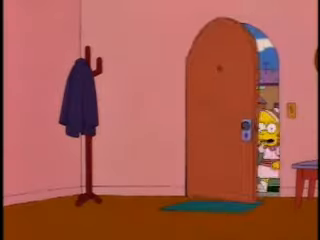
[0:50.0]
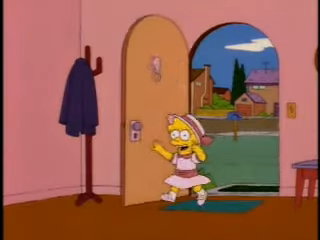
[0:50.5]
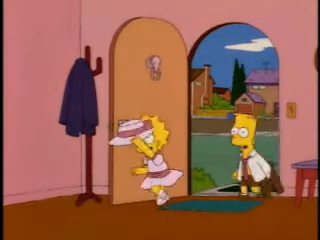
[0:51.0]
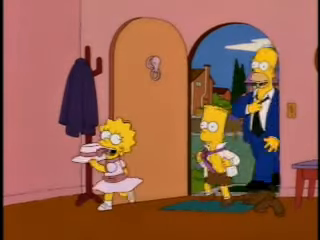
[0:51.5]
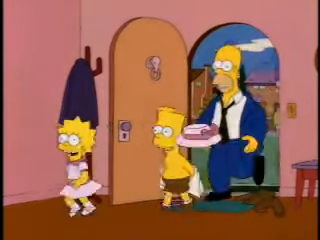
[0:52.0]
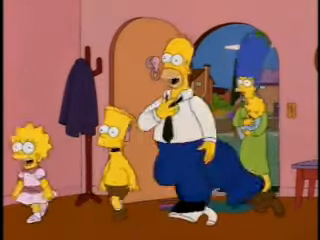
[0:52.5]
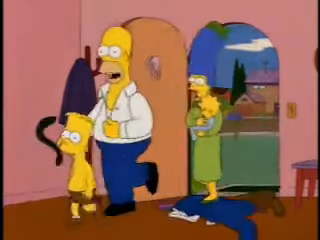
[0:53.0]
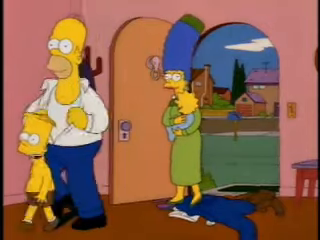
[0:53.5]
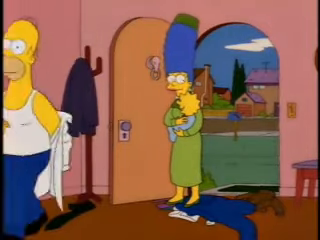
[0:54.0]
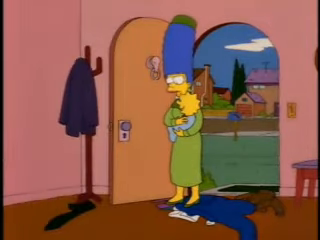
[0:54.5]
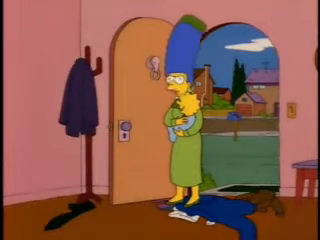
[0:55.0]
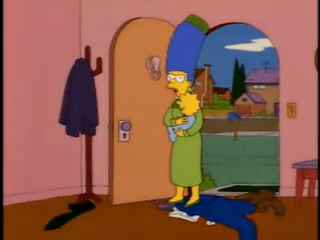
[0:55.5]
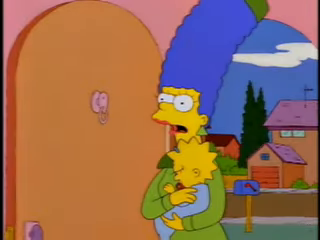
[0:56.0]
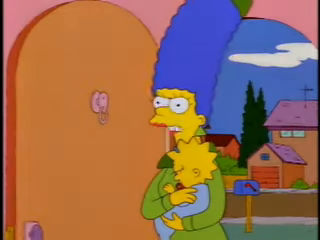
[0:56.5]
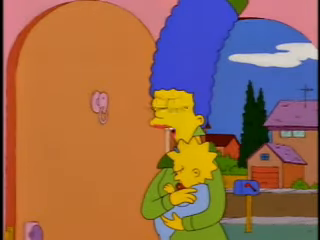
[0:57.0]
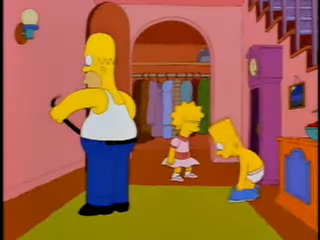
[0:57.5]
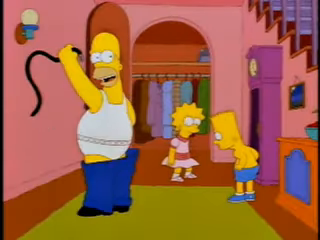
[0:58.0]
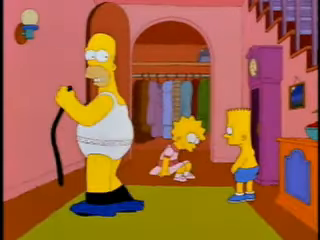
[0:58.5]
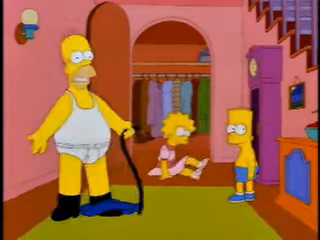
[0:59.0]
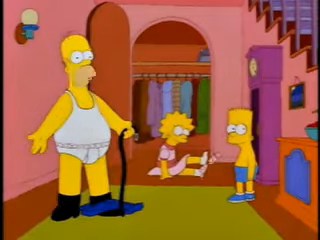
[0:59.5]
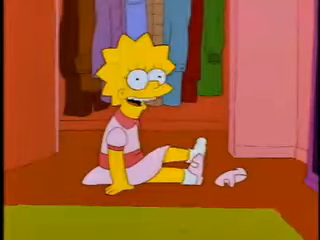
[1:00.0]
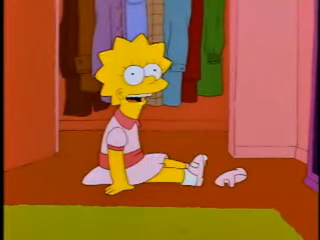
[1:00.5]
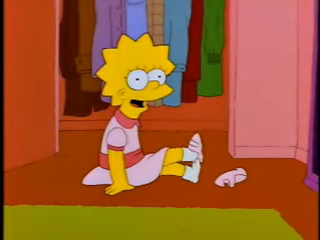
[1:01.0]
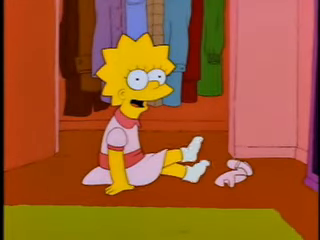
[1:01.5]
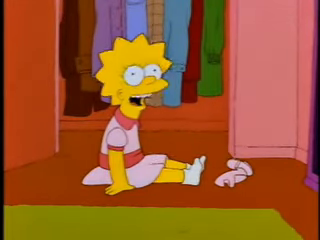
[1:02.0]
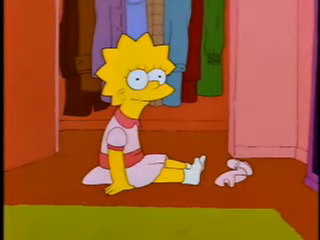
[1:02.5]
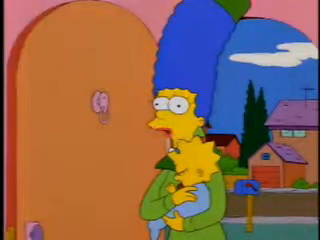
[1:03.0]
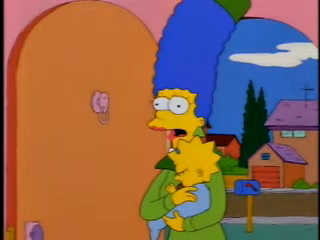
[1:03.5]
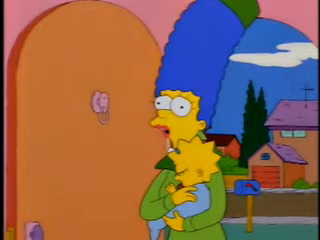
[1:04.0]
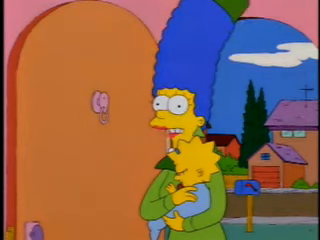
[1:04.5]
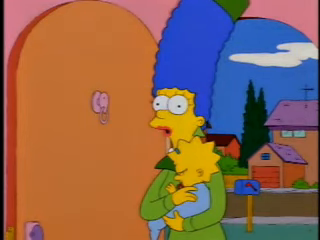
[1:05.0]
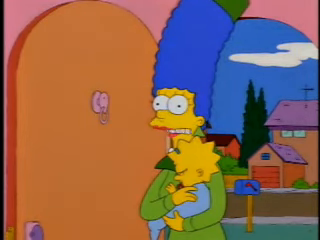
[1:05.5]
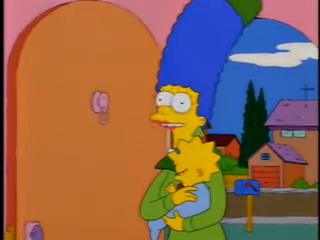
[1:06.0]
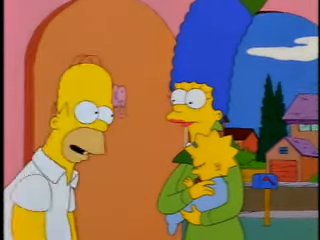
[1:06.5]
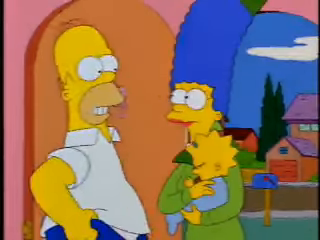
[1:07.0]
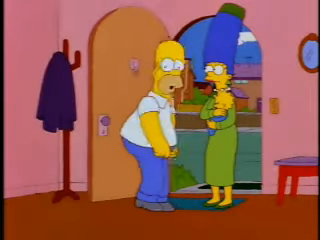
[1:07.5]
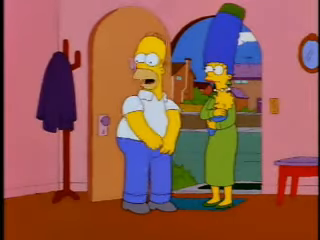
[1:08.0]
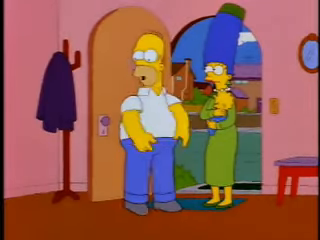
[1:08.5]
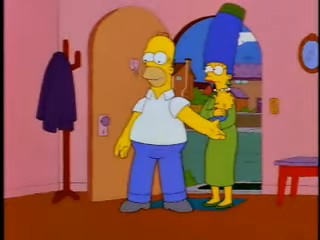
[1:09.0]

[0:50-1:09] Inside a cartoon house with pink walls, a wooden door opens and Lisa Simpson walks in through the front door. She wears a pink dress and a pink hat, holds her arms up, and her eyes are wide open; she looks very happy. Bart Simpson, who is yellow, walks in wearing an unbuttoned white shirt and brown shorts. Homer Simpson follows, wearing a blue suit jacket and pants with a white button-up shirt; as he comes through the door he takes off his coat and slings it on the floor, then takes off his tie and slings it on the floor. Behind him comes Marge Simpson in a green dress, with really tall blue hair topped by a green hat, holding a cartoon baby. She starts talking to the other family members as they take off their clothes.